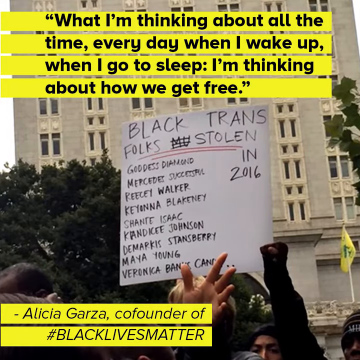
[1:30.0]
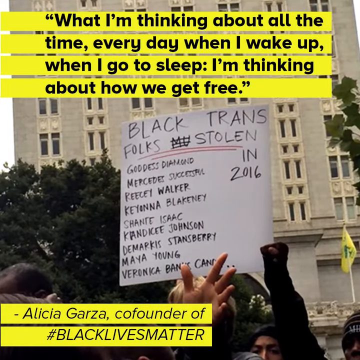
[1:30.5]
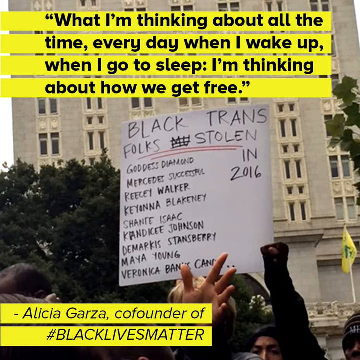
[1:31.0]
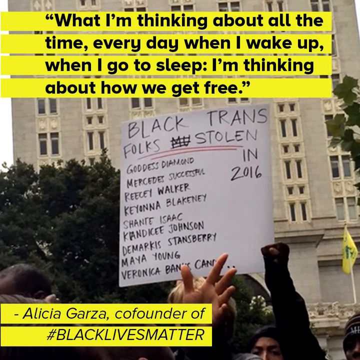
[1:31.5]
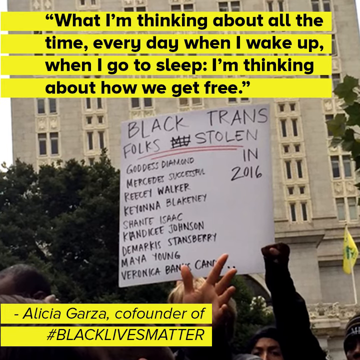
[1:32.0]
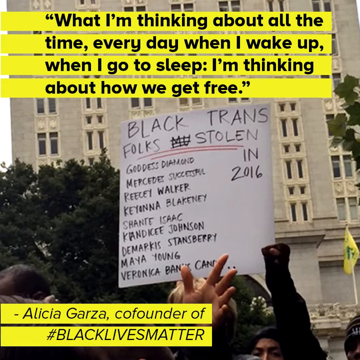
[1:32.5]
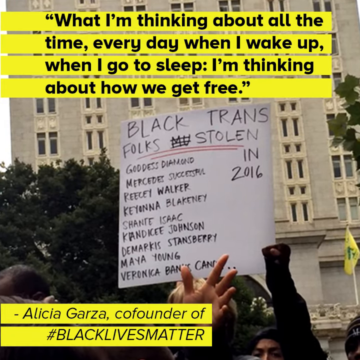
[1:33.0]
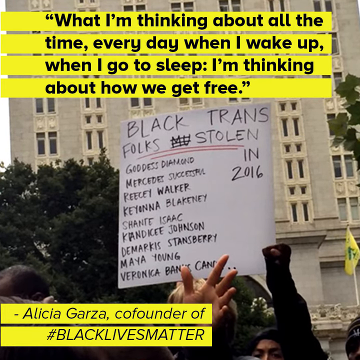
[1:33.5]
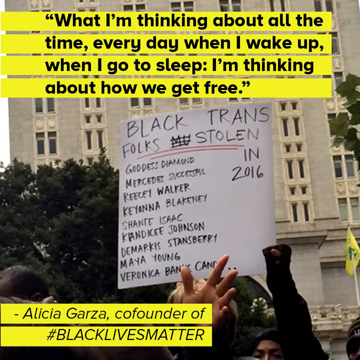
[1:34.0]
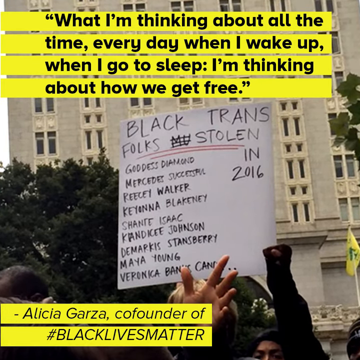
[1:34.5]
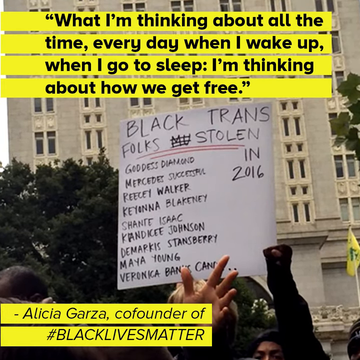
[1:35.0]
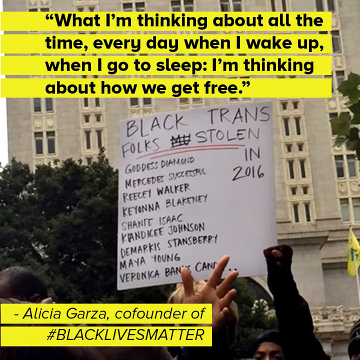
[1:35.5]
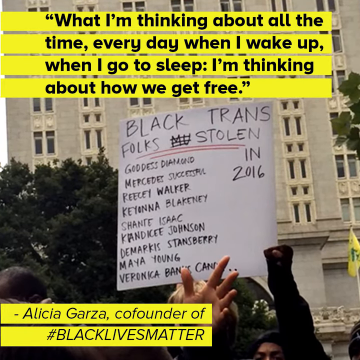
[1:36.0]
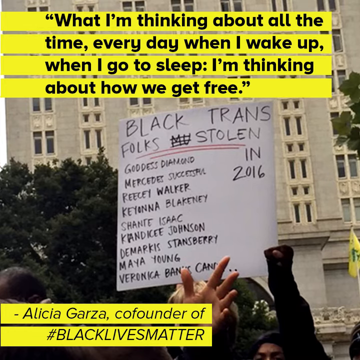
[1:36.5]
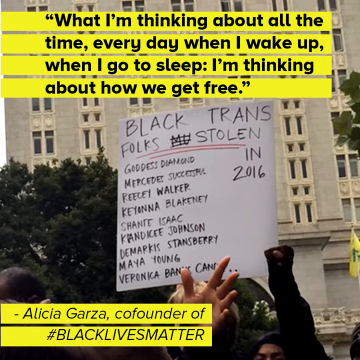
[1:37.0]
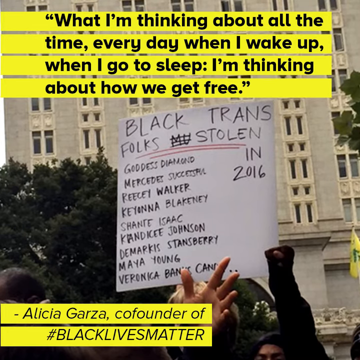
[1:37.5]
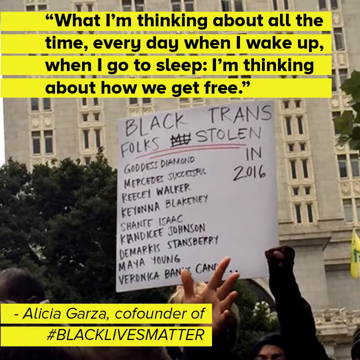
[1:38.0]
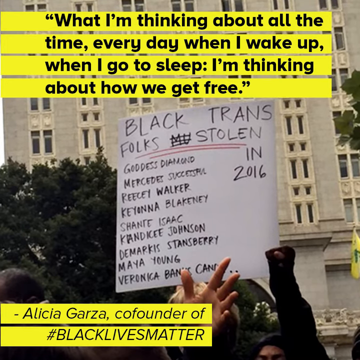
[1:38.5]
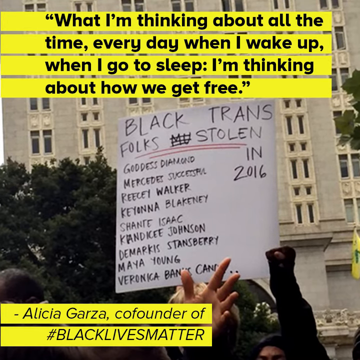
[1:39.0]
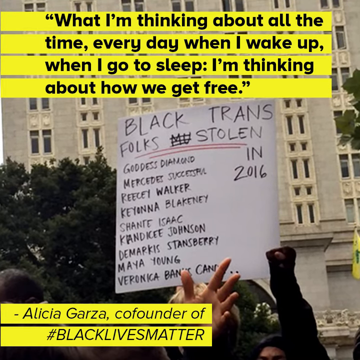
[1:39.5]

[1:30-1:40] The background is a real-life photo of a protest sign that reads "black trans folks stolen in 2016" and lists 15 names of trans folks. At the top, in yellow boxes with black lettering, a quote reads: "what I'm thinking about all the time, every day when I wake up, when I go to sleep, I'm thinking about how we get free." In the bottom left-hand corner is the attribution "Alicia Garza, co-founder of #black lives matter." A yellow flag and a giant white building with slotted windows are also visible.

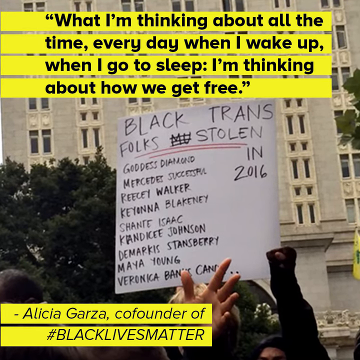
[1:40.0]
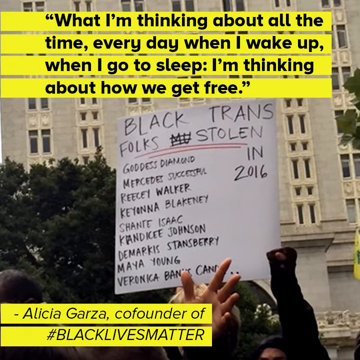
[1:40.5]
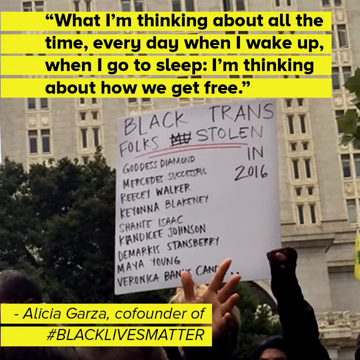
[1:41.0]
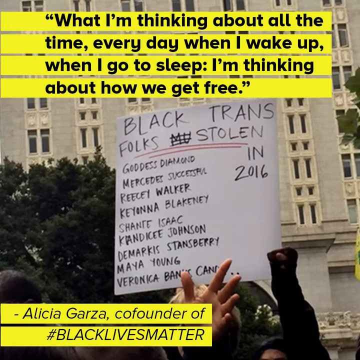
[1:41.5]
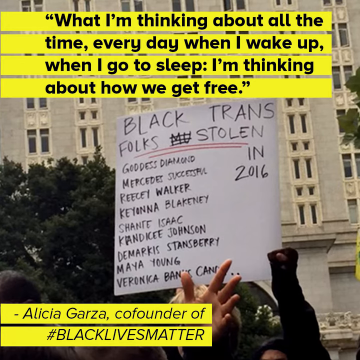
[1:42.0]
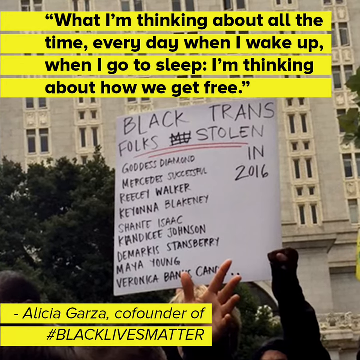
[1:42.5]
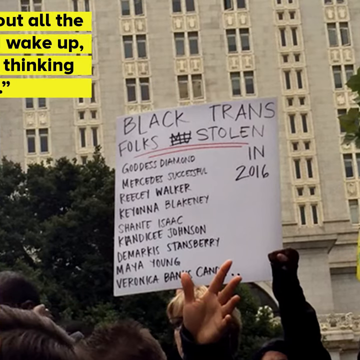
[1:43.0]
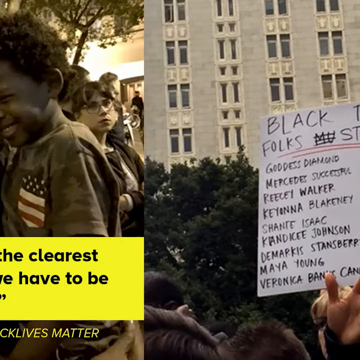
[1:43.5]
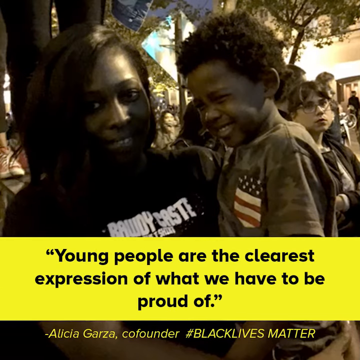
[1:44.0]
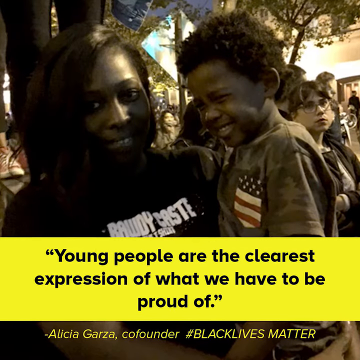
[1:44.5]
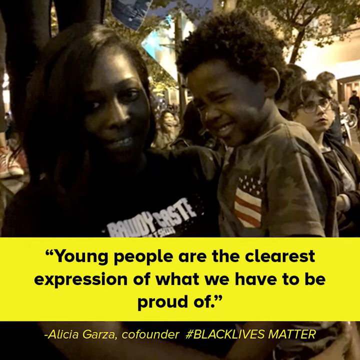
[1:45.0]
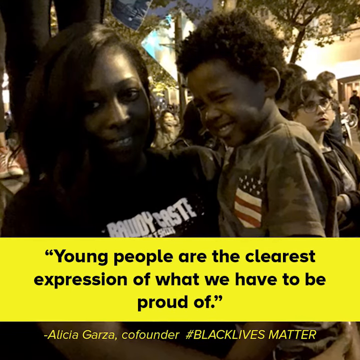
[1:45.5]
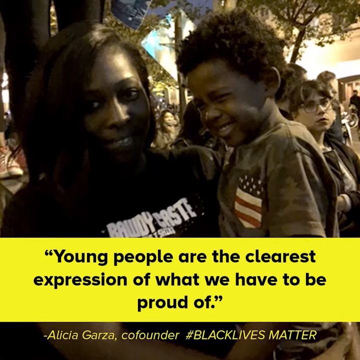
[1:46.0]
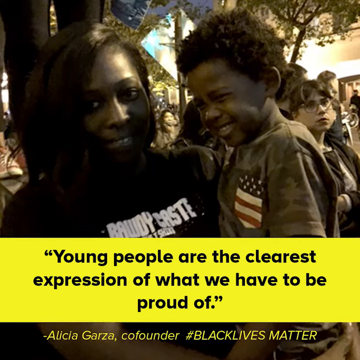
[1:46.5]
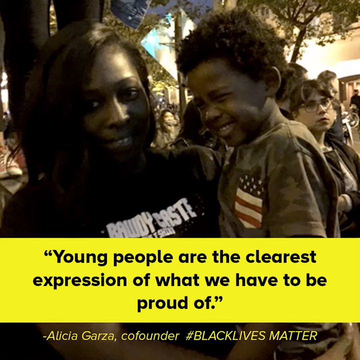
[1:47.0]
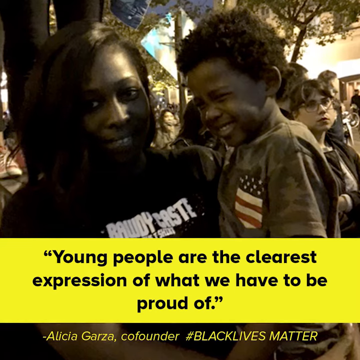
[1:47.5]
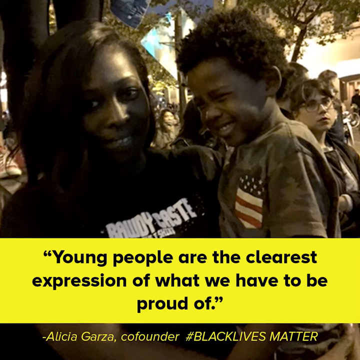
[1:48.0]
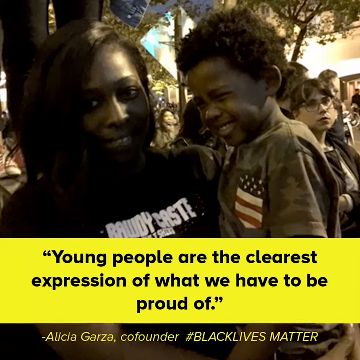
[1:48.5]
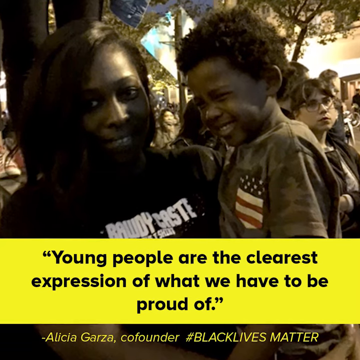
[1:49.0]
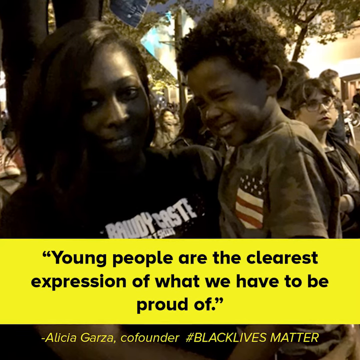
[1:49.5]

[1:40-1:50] A picture shows two people in the foreground: a Black woman on the left, wearing a black t-shirt and smiling at the camera, holding what looks to be her son. He is not facing the camera and wears a camo t-shirt with a flag as the pocket square. In the background on the right-hand side is an annoyed-looking white woman who seems to have brown hair and bangs, with round glasses and her arms folded in front of her. Beneath the picture is a yellow box with black lettering that reads: "young people are the clearest expression of what we have to be proud of." Underneath, in yellow letters, it says "Alicia Garza, co-founder Black Lives Matter."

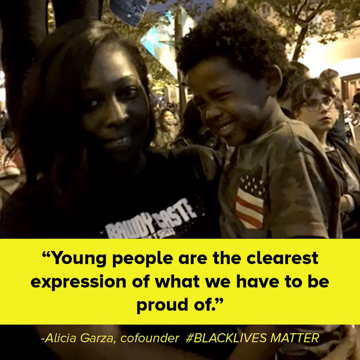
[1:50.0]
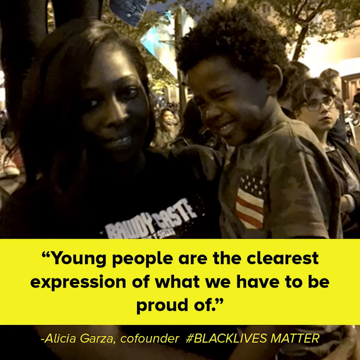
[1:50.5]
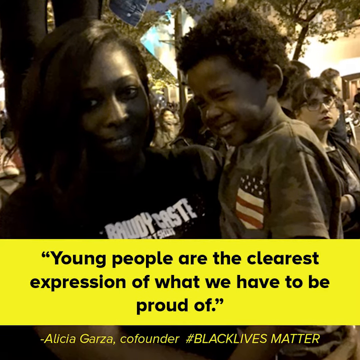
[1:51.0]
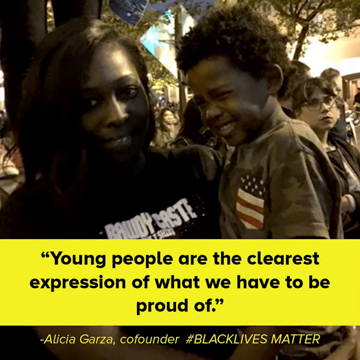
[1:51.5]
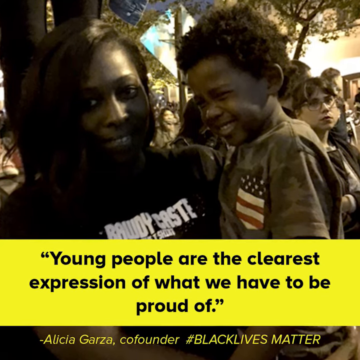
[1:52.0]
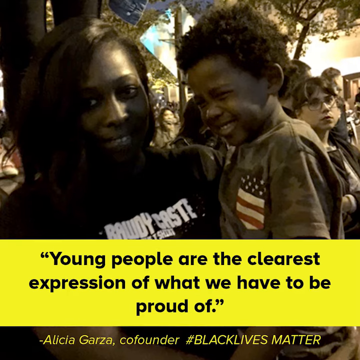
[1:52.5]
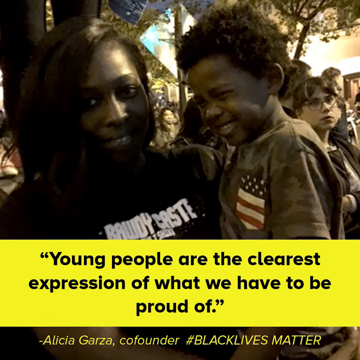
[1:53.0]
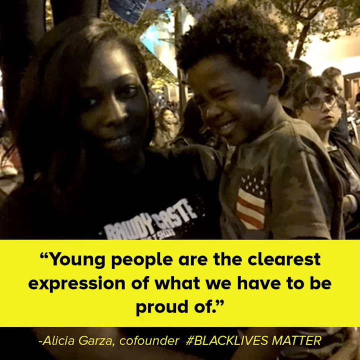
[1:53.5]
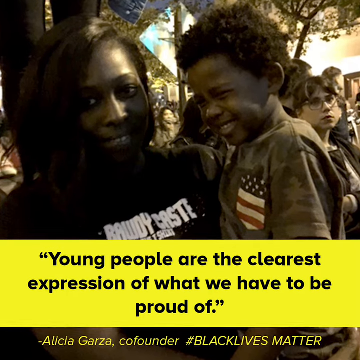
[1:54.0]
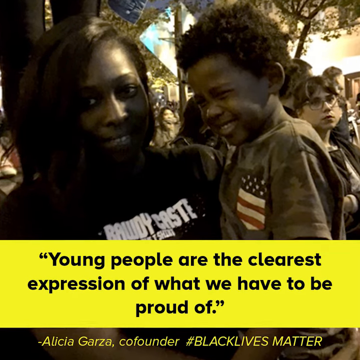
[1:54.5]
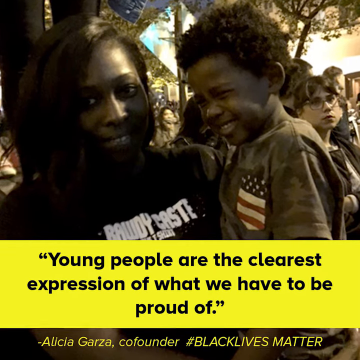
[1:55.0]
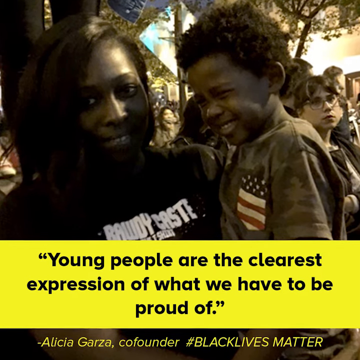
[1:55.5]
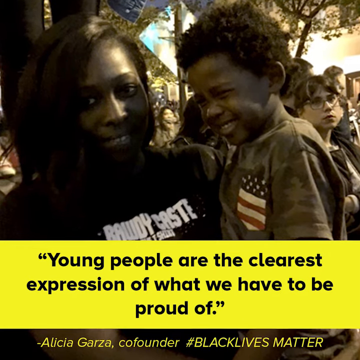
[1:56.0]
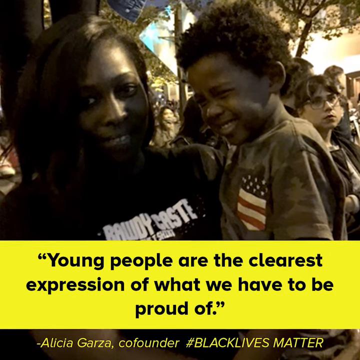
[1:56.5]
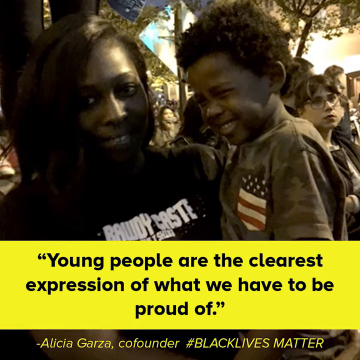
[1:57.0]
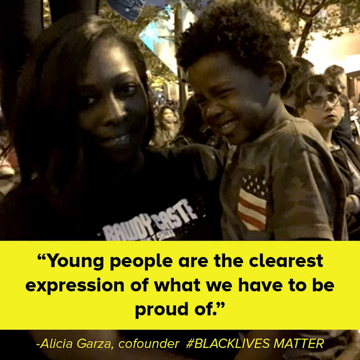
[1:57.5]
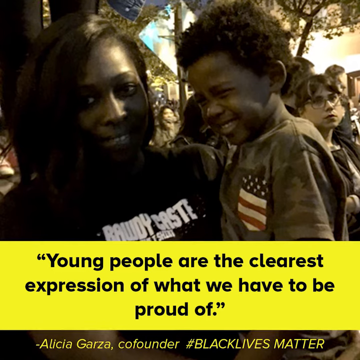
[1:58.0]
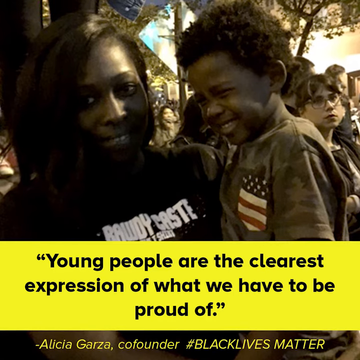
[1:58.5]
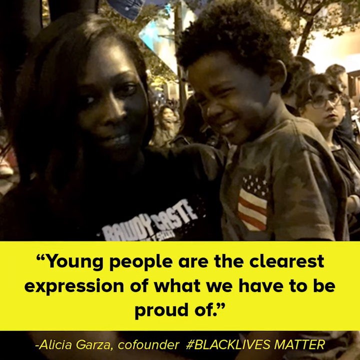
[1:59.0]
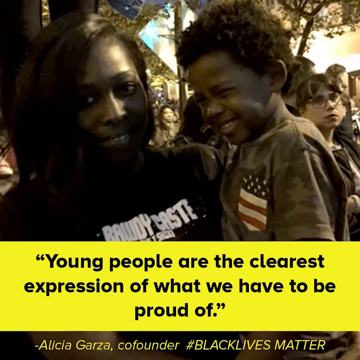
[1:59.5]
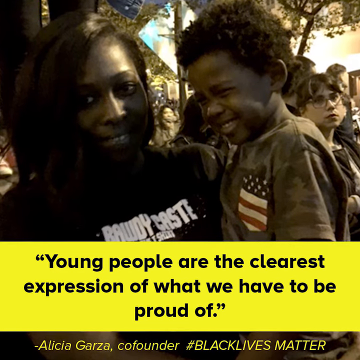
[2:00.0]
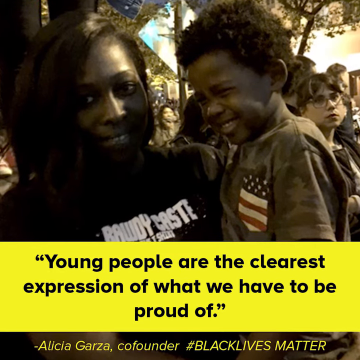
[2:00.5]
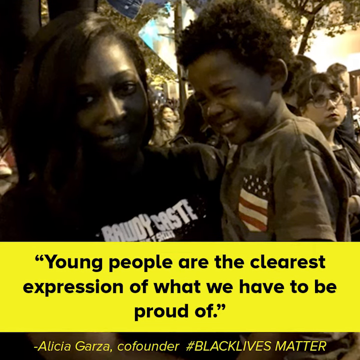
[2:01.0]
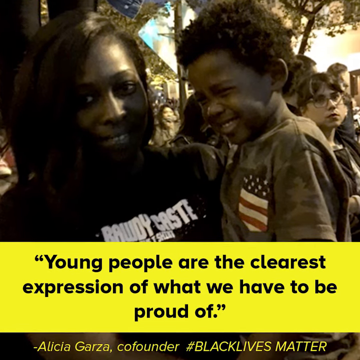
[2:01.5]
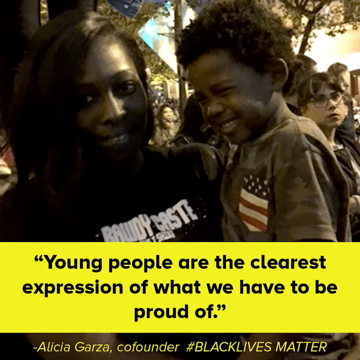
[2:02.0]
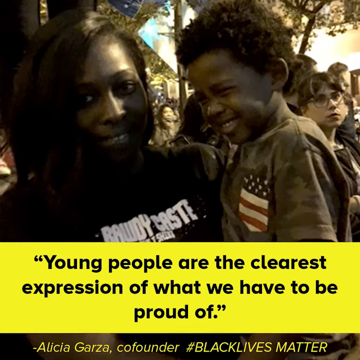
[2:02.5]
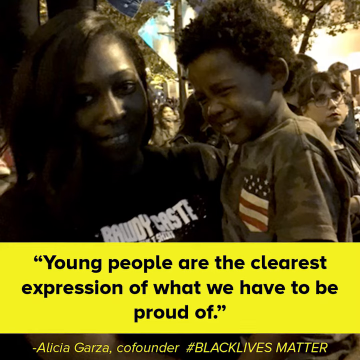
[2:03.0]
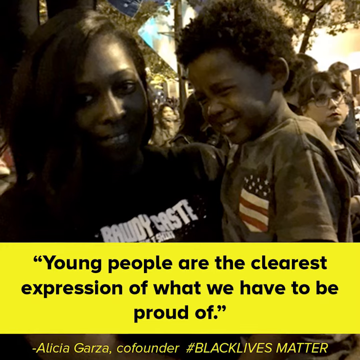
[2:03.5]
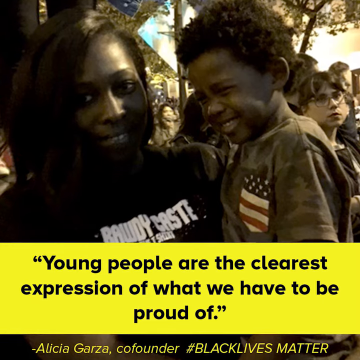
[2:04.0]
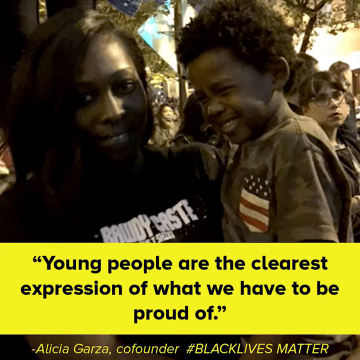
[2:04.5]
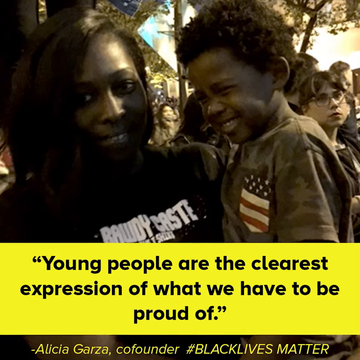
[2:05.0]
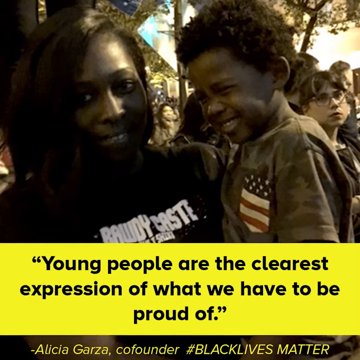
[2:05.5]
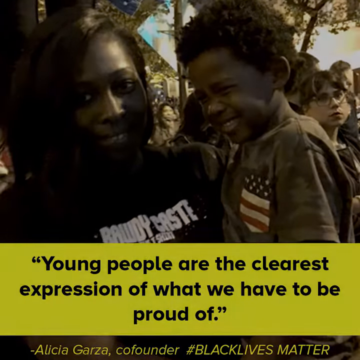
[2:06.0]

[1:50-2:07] The background picture shows two people in the foreground of a large protest. A Black mother on the left side of the screen, wearing a black t-shirt with white lettering, holds her Black son, who is on the right side of the screen and wears a camel t-shirt with an American flag pocket square. To the right of him is a very annoyed-looking white person with curtain bangs, circular glasses, and her arms folded. Beneath the scene is a yellow box with black lettering that reads: "young people are the clearest expression of what we have to be proud of." Underneath, in yellow letters, it says "– Alicia Garza co-founder of #black lives matter." Trees and buildings are in the background of the picture.